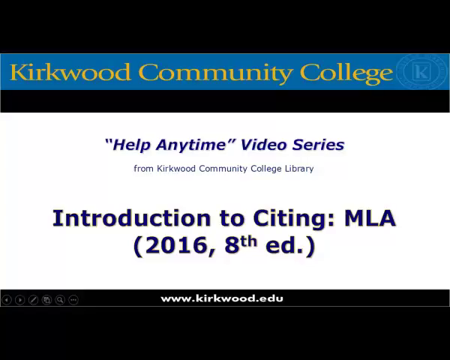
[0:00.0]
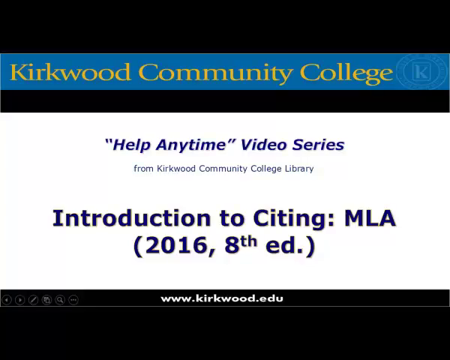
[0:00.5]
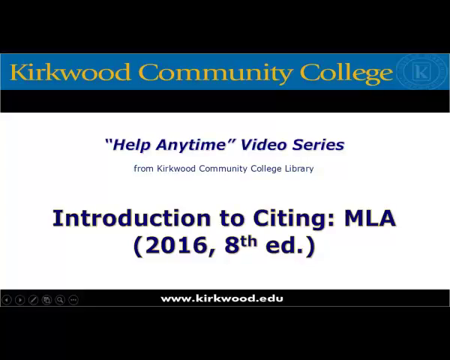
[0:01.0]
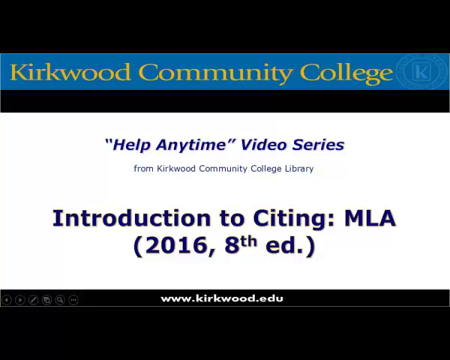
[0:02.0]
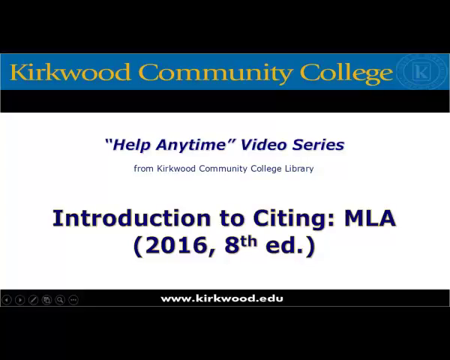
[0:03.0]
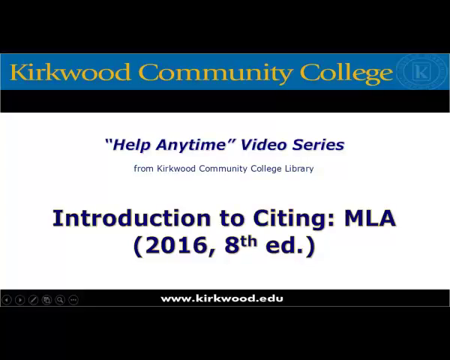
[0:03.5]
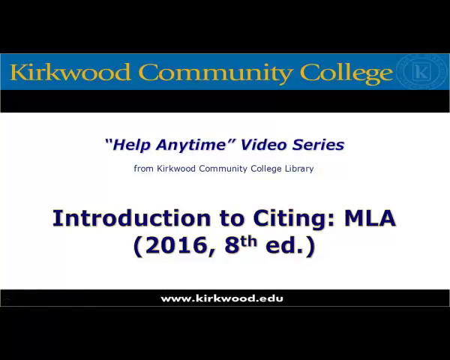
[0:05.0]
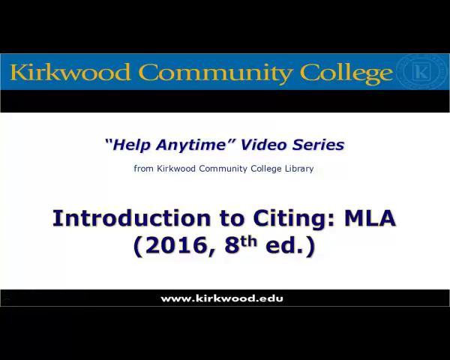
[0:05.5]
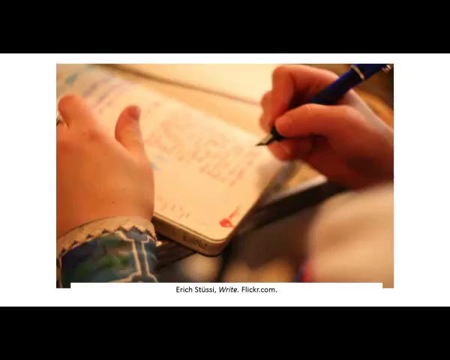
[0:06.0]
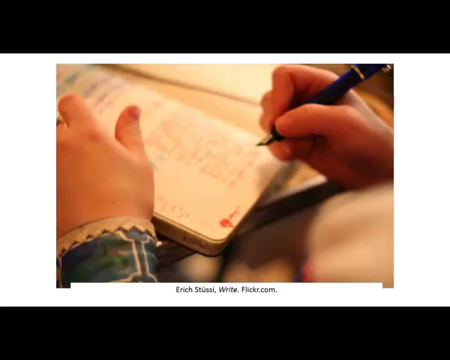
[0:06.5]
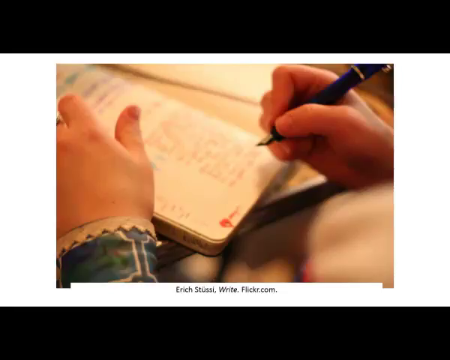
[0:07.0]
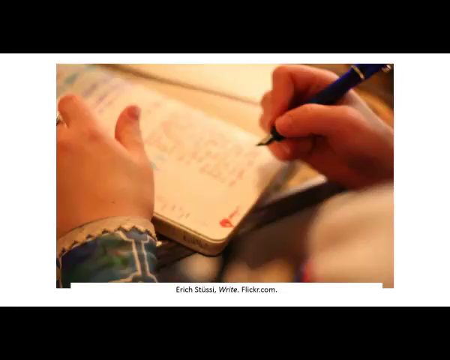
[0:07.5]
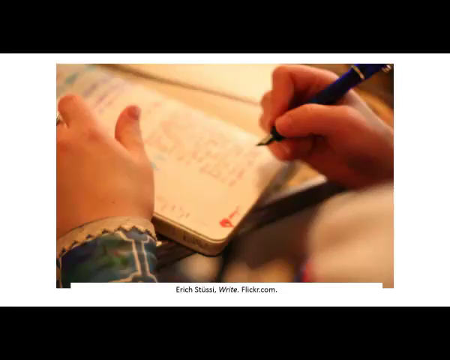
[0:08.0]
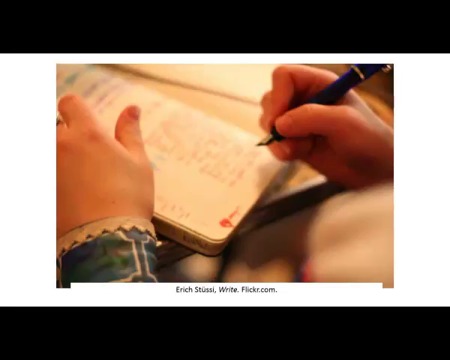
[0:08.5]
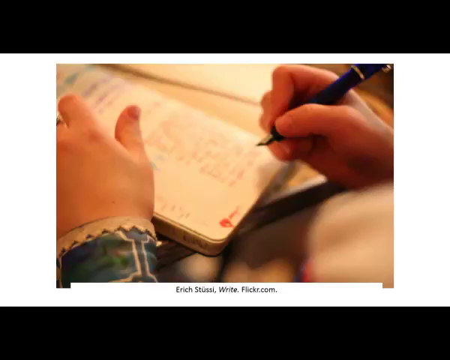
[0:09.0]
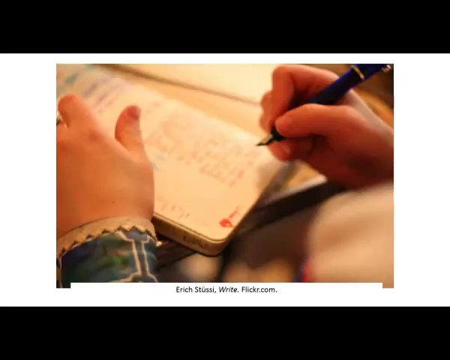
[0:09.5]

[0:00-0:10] The video opens on a screen whose top part is black, with a blue banner at the bottom center reading "Kirkwood Community College." To the right of the word "College" is a badge or logo of the community college. Underneath, on a white section of the background, smaller text reads ""Help Anytime" Video Series from Kirkwood Community College Library," with "Help Anytime" in quotation marks. In bigger text below is "Introduction to Citing (MLA 2016, 8th ED)," with "2016, 8th ED" in parentheses. At the bottom of the screen is a black bar with the link "www.kirkwood.edu" over it. After a moment, a picture appears of fair-skinned hands holding a blue pen and writing in a book, and the bottom of the picture reads "Eric Stussi Wright Flickr.com."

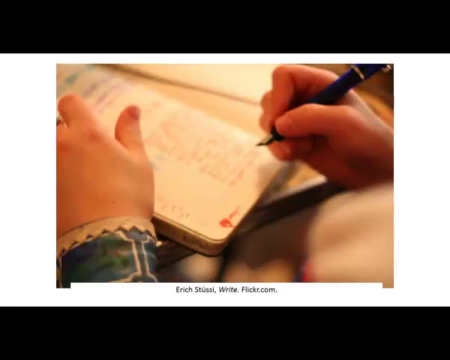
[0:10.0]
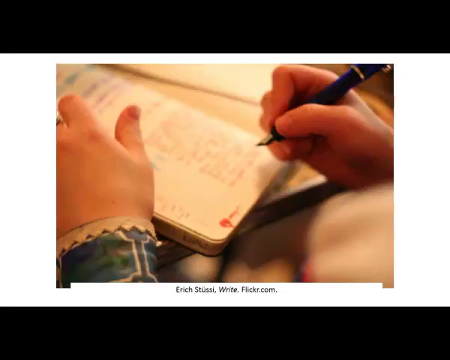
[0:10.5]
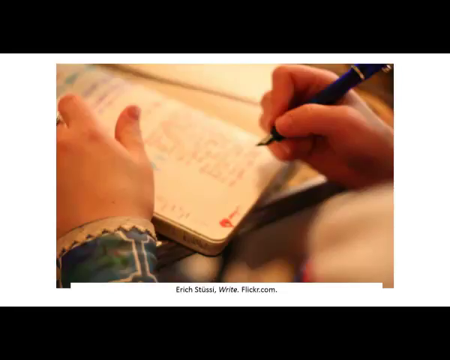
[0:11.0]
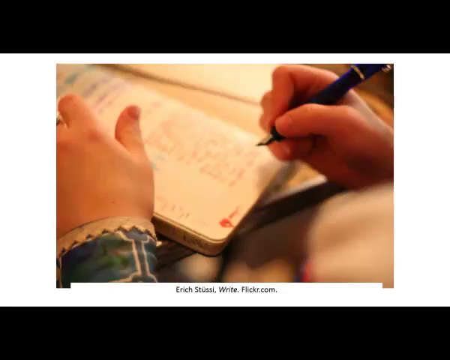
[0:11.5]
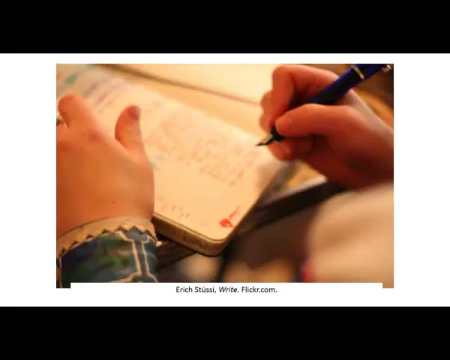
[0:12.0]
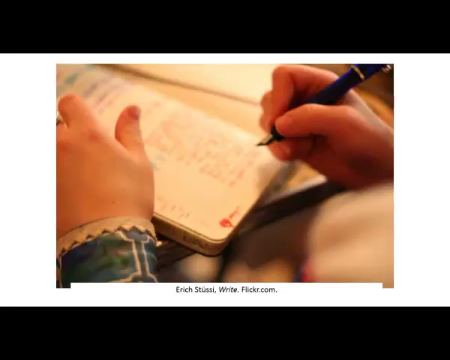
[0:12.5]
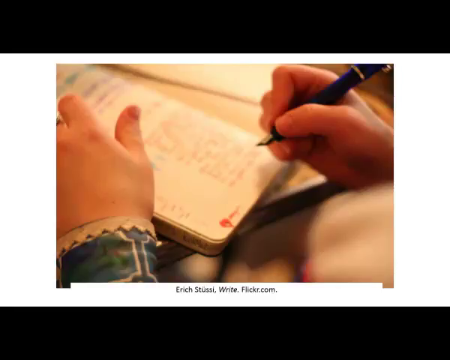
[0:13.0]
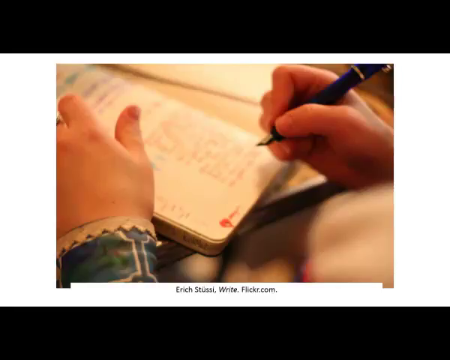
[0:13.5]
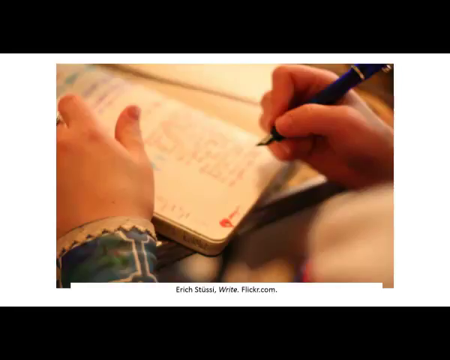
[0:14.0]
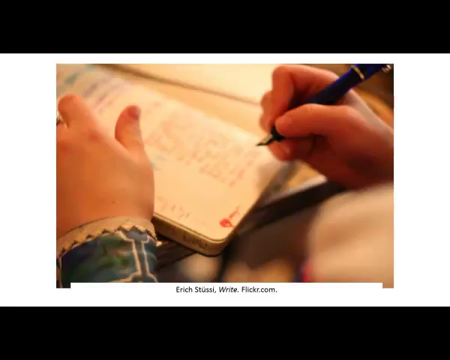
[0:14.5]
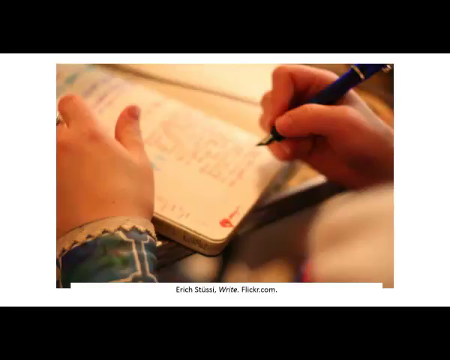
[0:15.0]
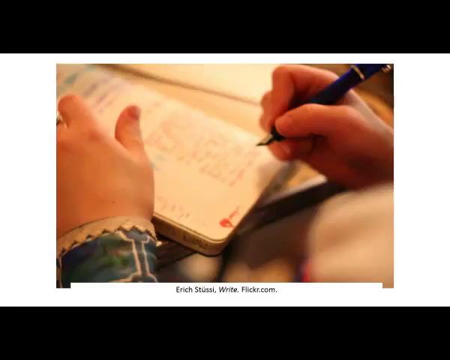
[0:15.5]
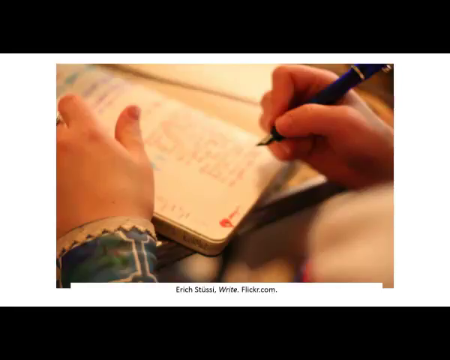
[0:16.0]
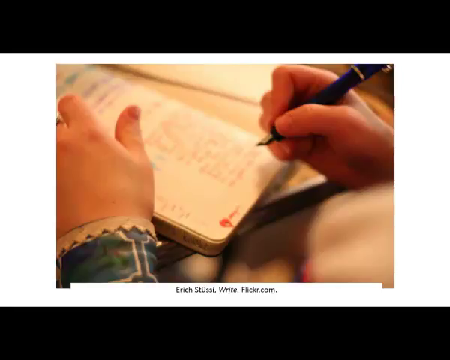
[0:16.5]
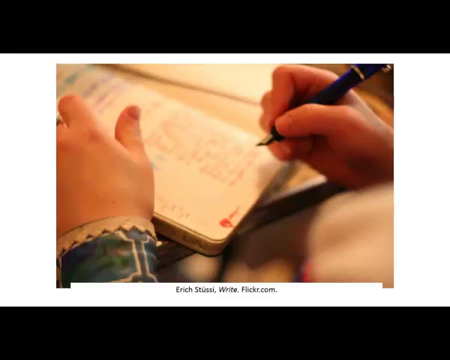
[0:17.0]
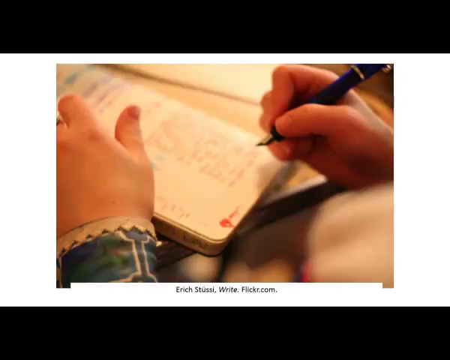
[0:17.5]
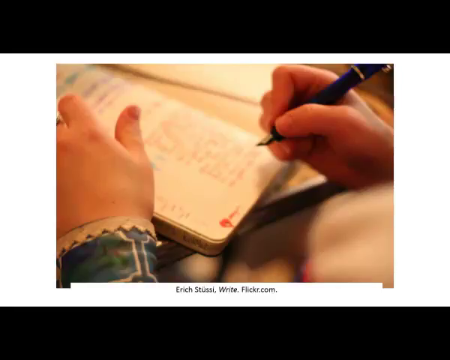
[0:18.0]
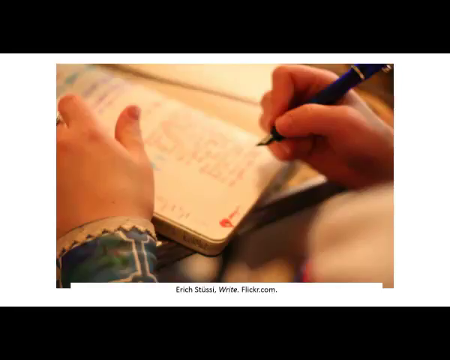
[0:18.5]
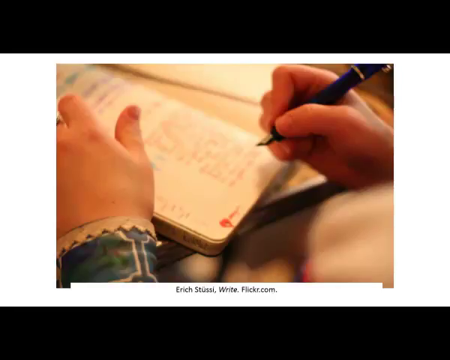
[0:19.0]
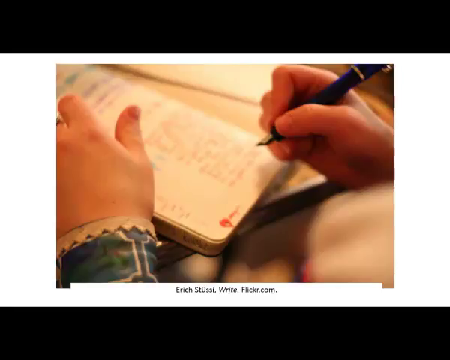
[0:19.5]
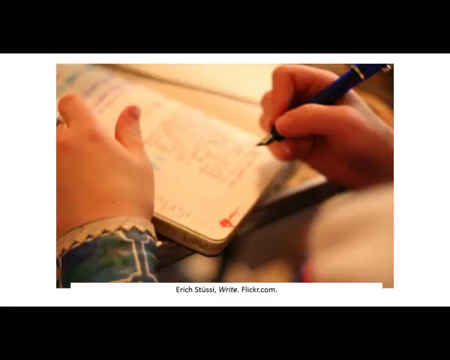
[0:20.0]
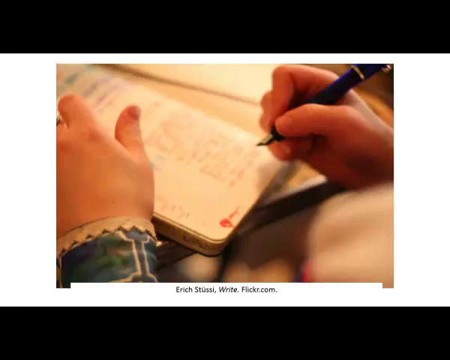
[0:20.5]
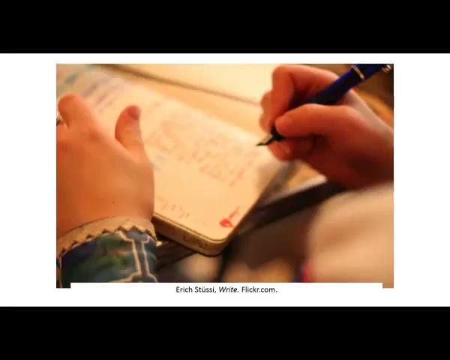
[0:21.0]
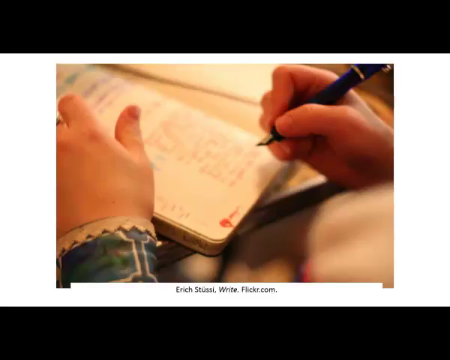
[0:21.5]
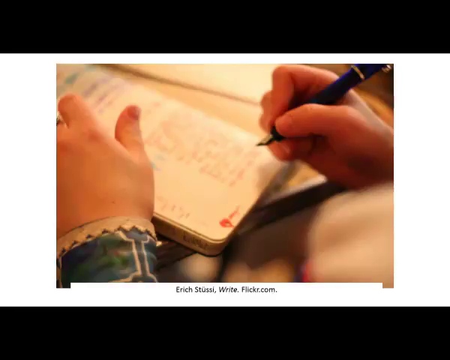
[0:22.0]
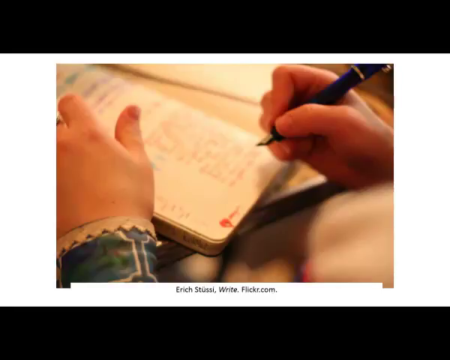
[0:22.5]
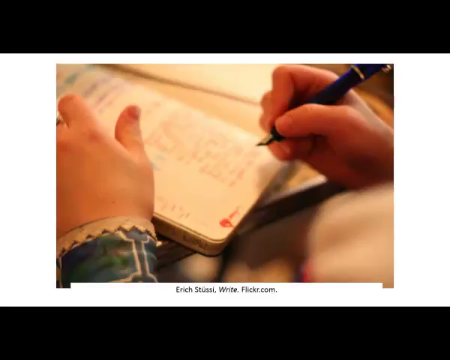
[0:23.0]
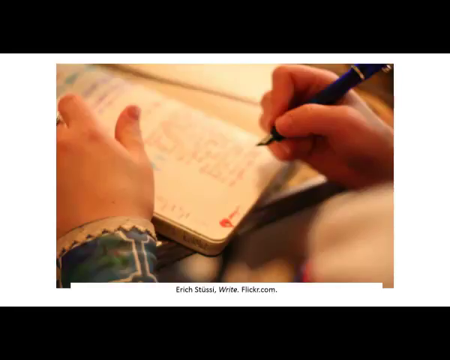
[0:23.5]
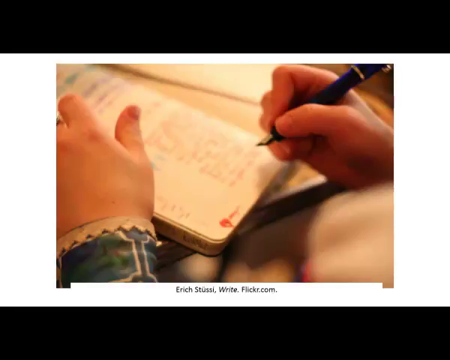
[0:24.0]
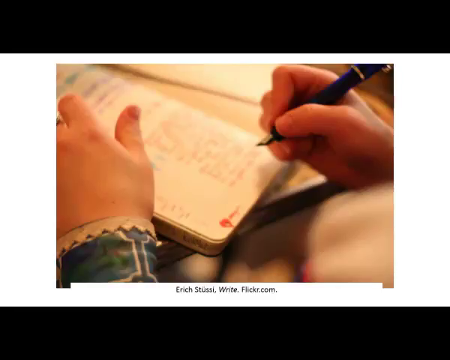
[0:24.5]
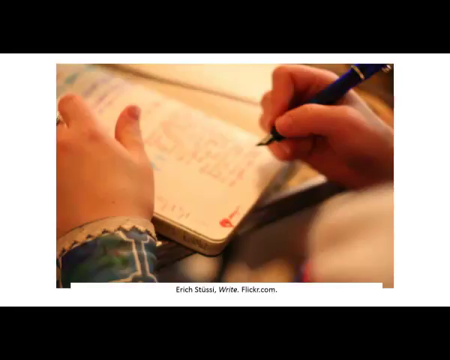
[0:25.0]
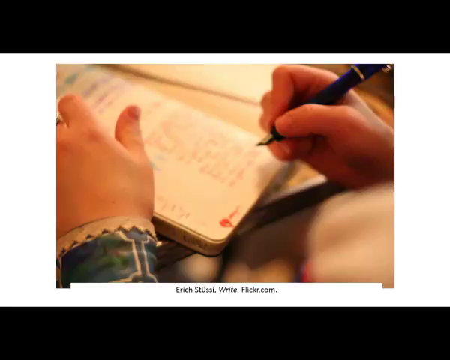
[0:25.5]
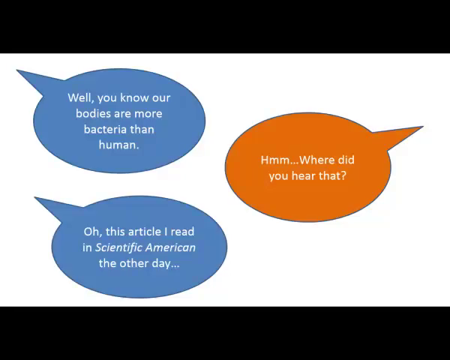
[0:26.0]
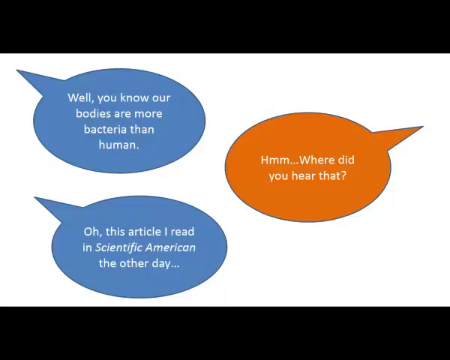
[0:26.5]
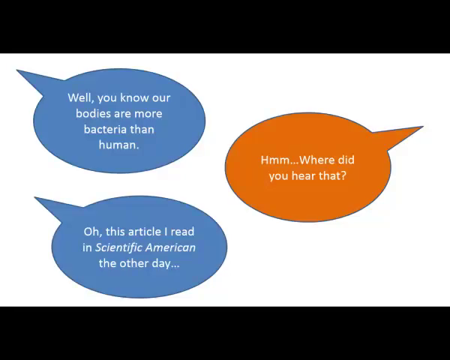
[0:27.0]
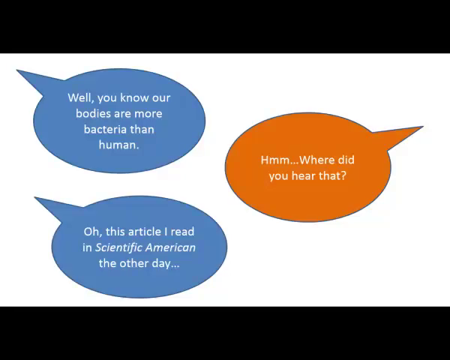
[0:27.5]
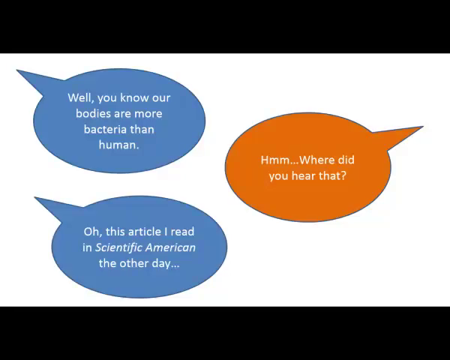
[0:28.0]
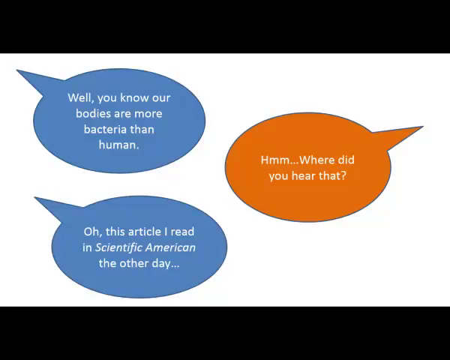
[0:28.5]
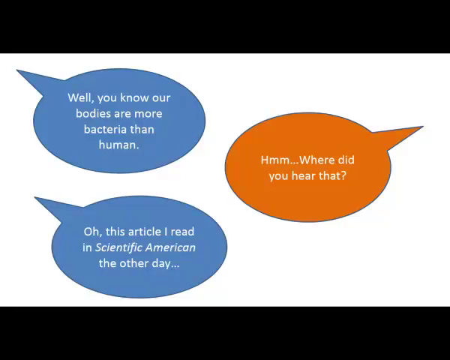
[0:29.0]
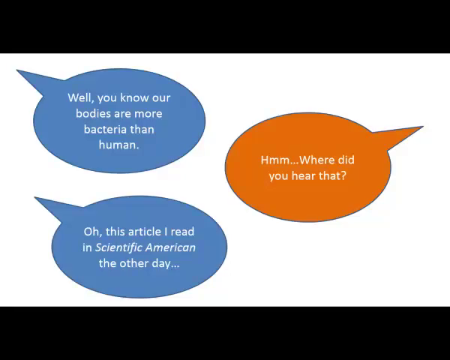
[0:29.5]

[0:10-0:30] The same pair of hands is shown writing in a notebook with a pen; it is a still picture of a pen and an open notebook, and the hands look to be a child's. Underneath the picture it reads "Erich Stussi Wright Flickr.com." This picture is shown for most of the time. Then three speech bubbles appear on a white background: two blue bubbles on the left with tails pointing left, and one orange bubble to the right of them. The top blue bubble reads "well, you know our bodies are more bacteria than human," the one beneath it reads "oh, this article I read in Scientific American the other day," and the orange one reads "hmm, where did you hear that?"